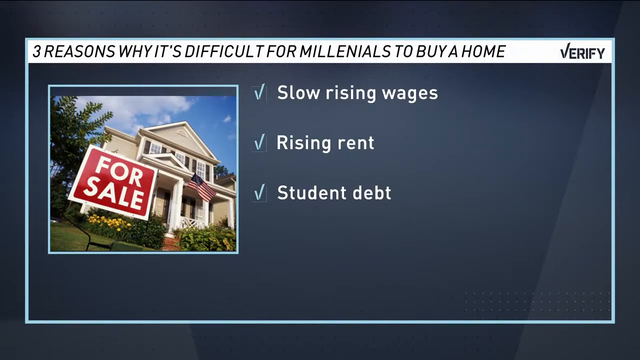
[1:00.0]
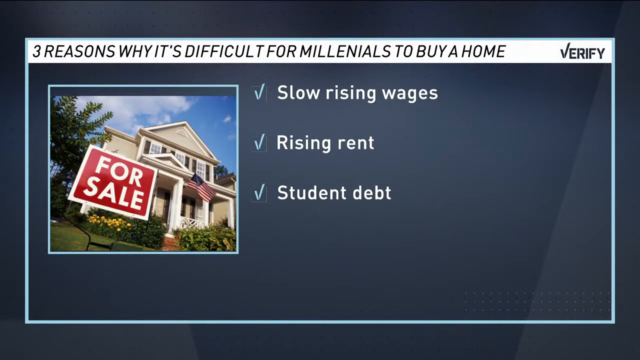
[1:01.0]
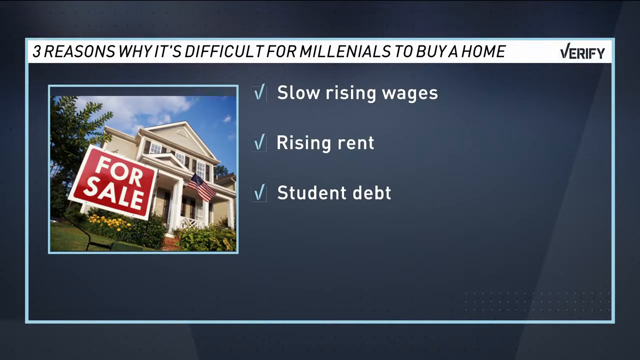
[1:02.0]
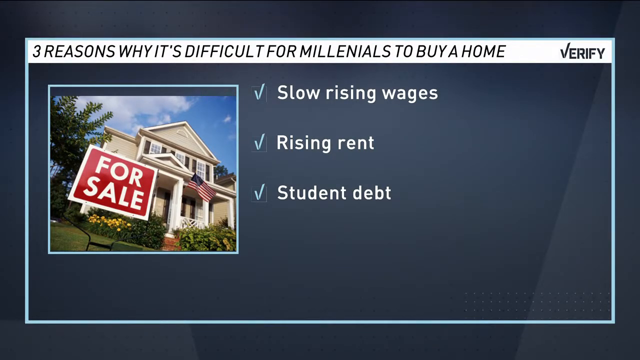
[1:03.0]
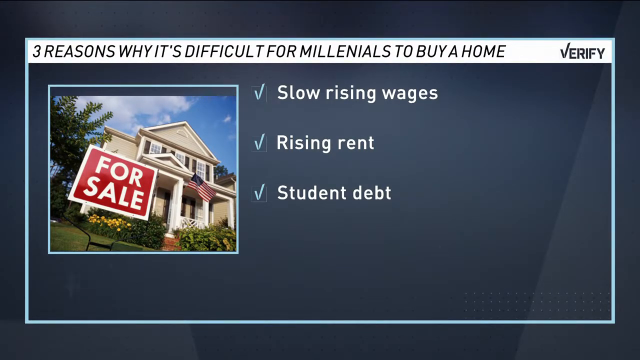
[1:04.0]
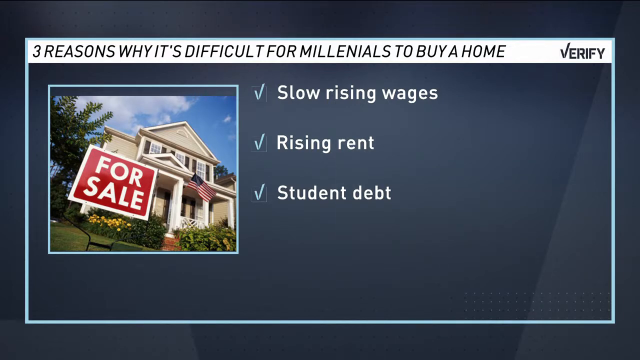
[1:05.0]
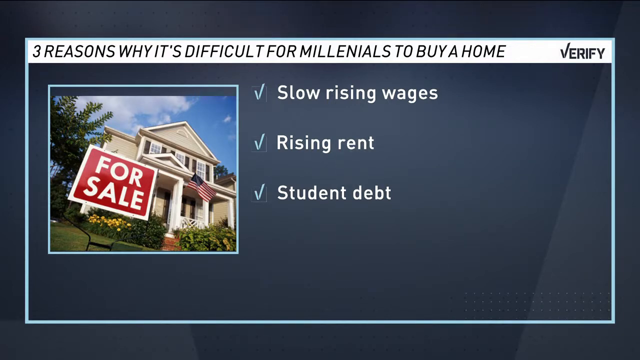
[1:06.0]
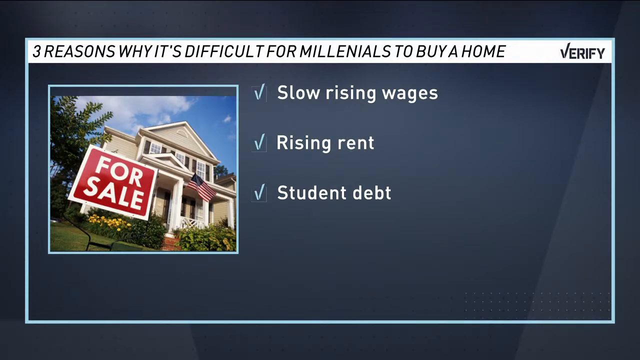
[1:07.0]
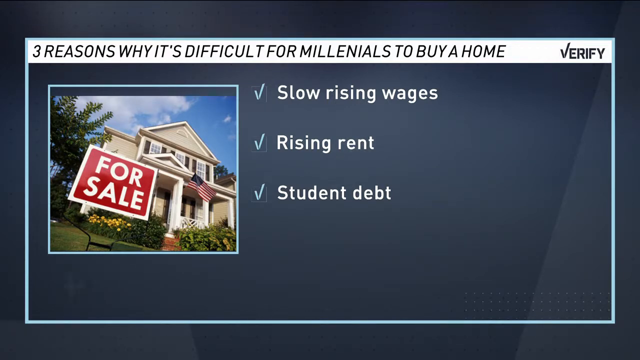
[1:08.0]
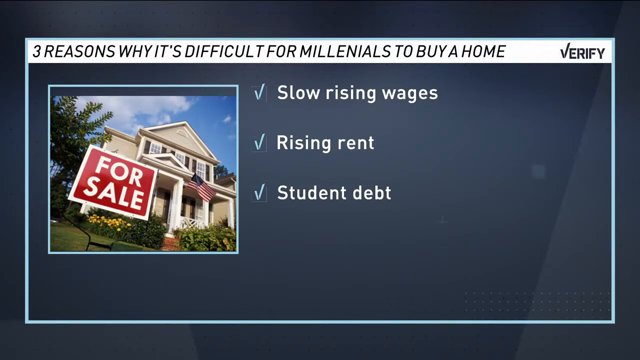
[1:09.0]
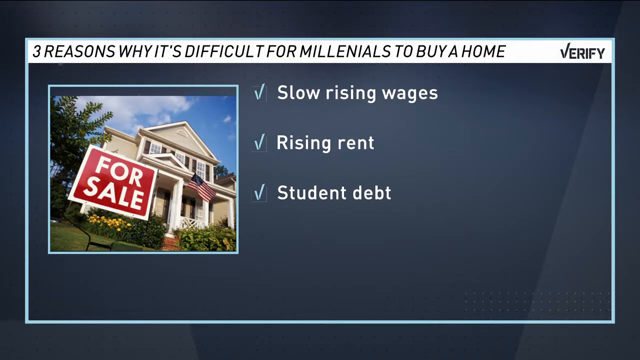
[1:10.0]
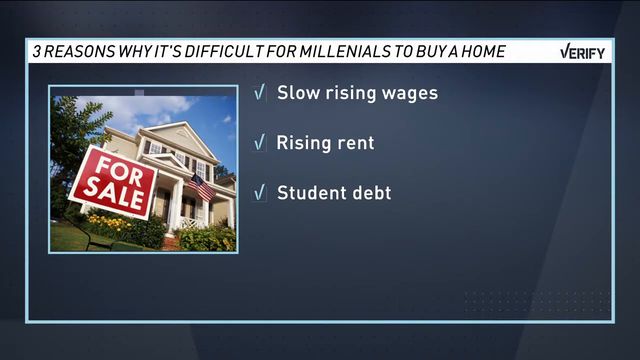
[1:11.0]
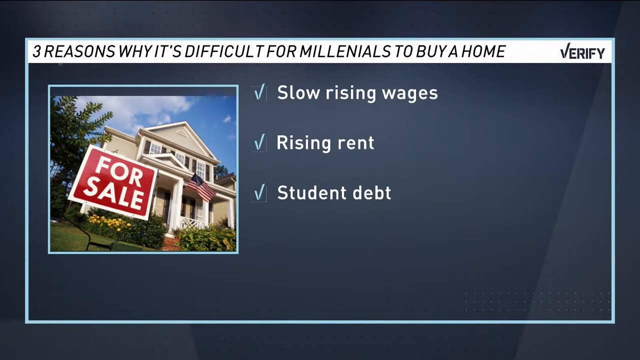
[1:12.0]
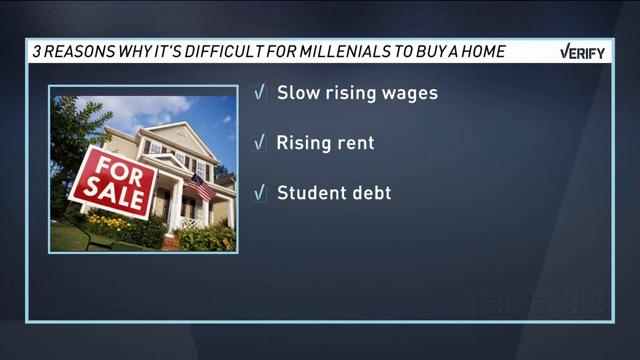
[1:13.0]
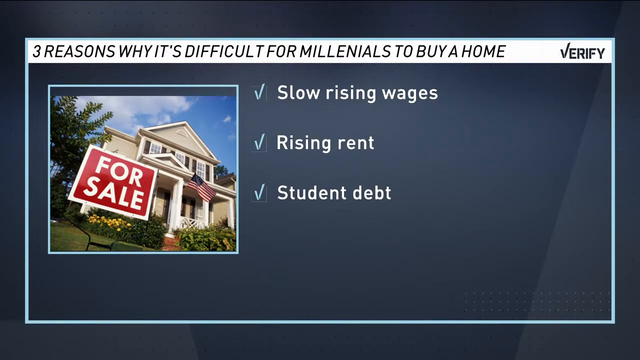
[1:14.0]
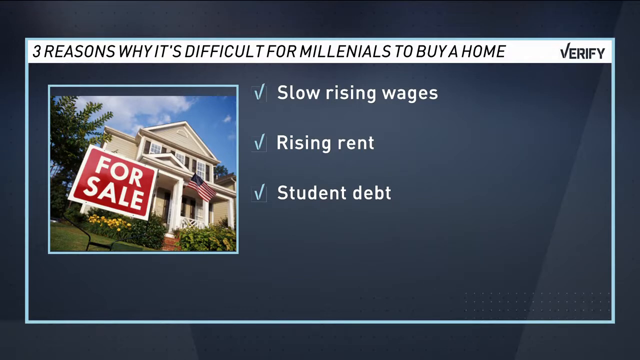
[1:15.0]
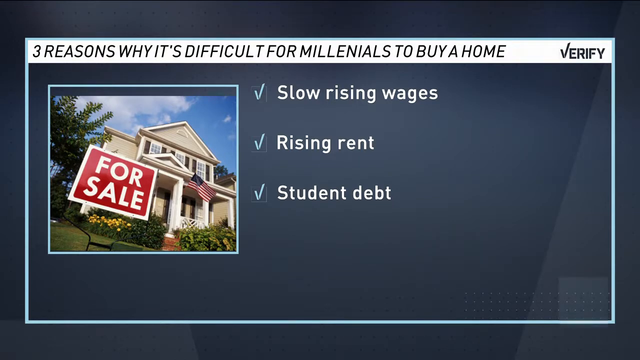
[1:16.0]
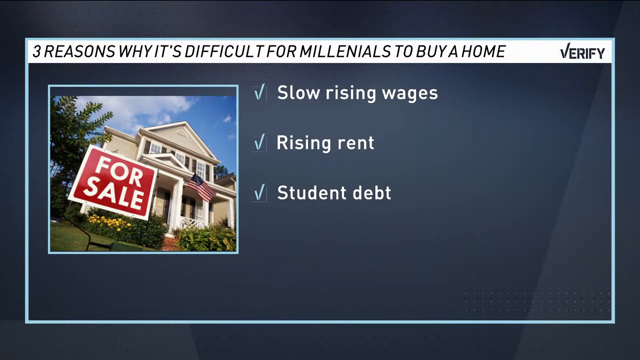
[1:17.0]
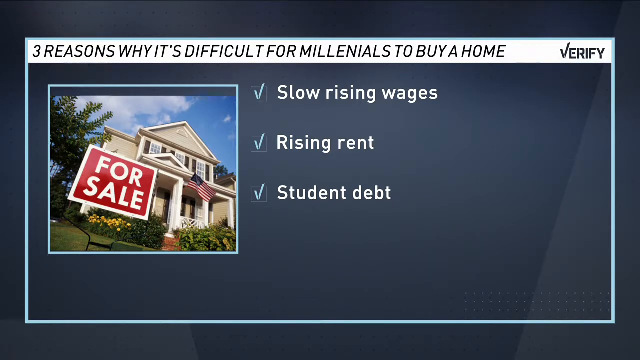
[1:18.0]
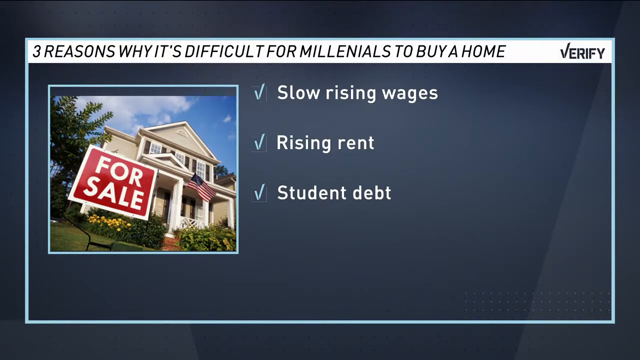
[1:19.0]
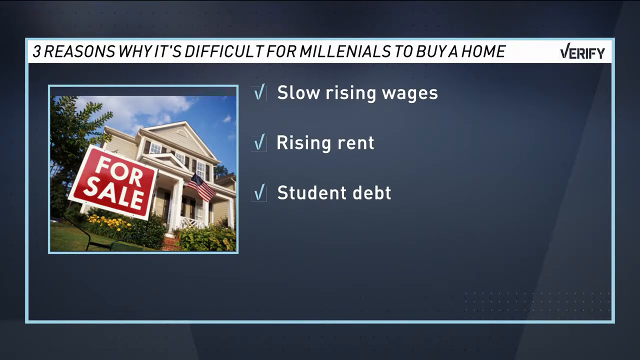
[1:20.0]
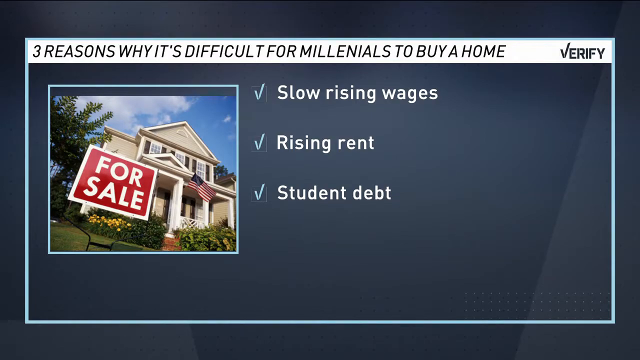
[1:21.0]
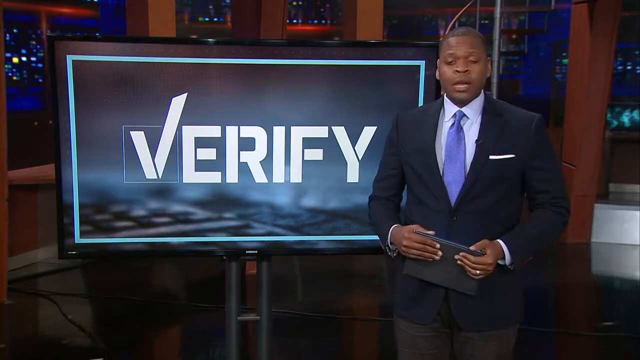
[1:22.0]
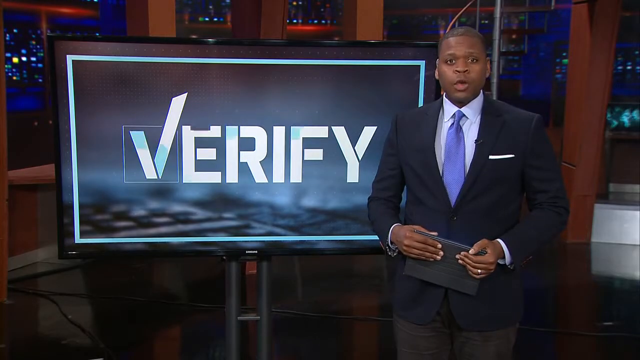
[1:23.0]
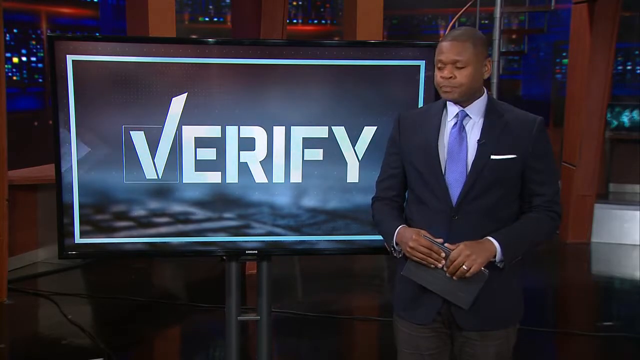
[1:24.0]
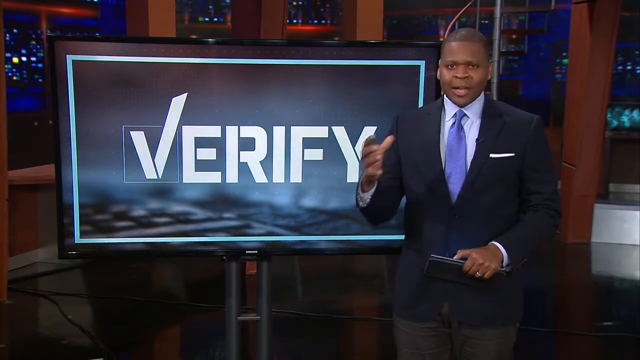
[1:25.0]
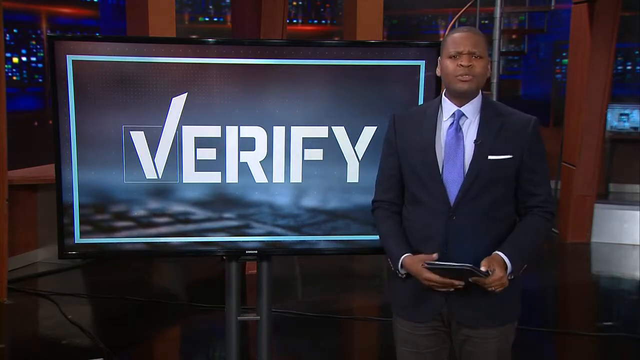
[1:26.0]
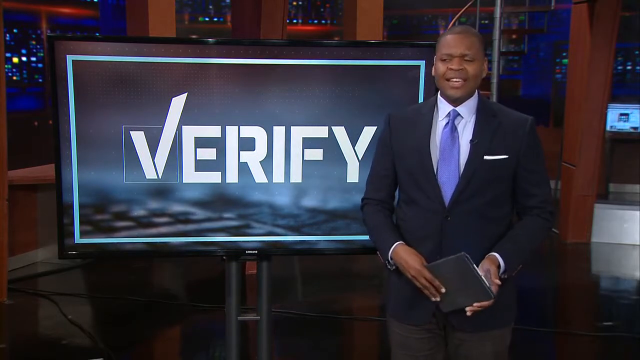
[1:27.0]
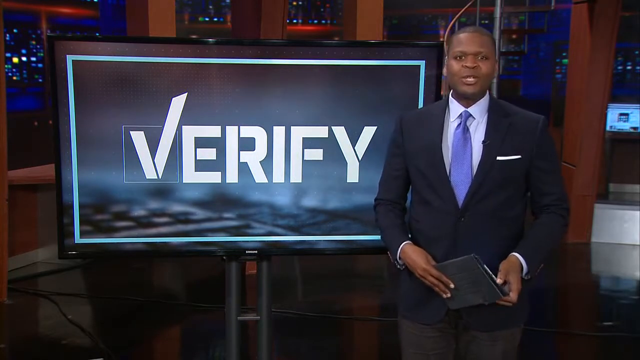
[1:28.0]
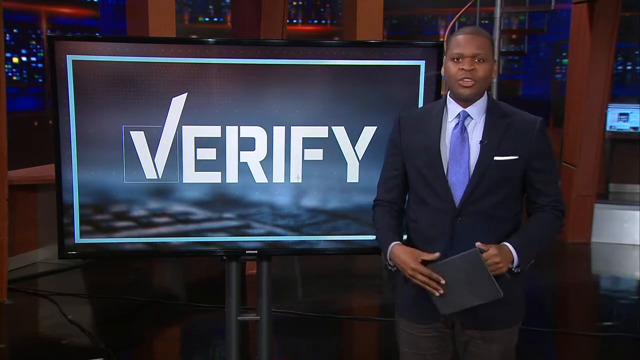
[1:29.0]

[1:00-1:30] The screen with the three points stays up for a while. The picture is very small and the words are kind of off to the center, so the page is closely packed, without much space between the words and the picture.